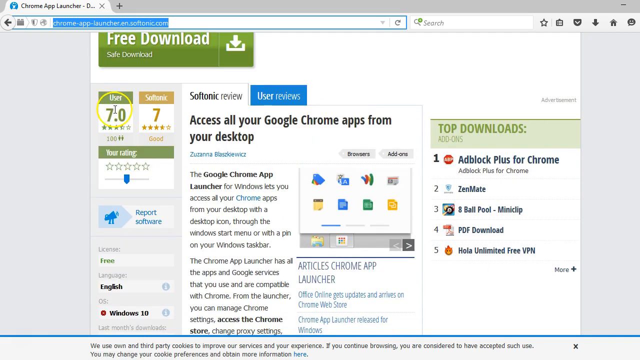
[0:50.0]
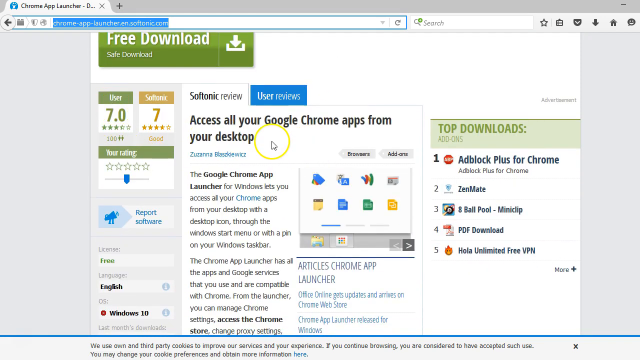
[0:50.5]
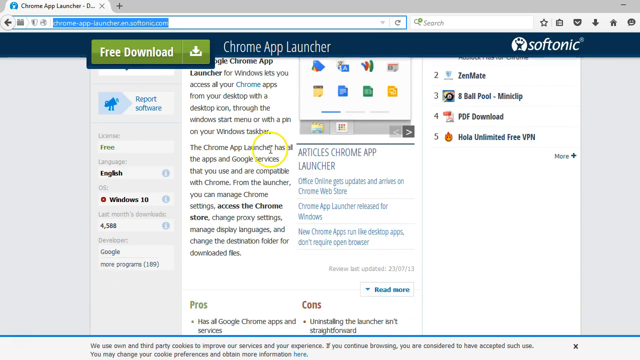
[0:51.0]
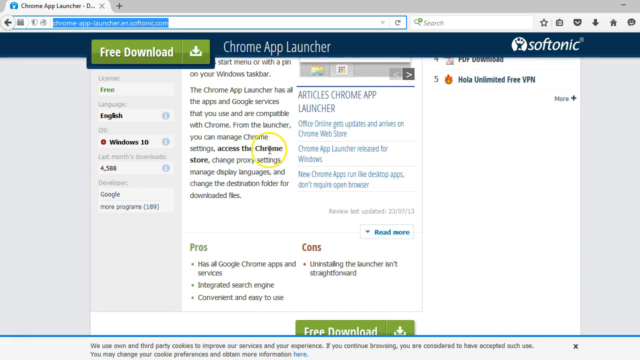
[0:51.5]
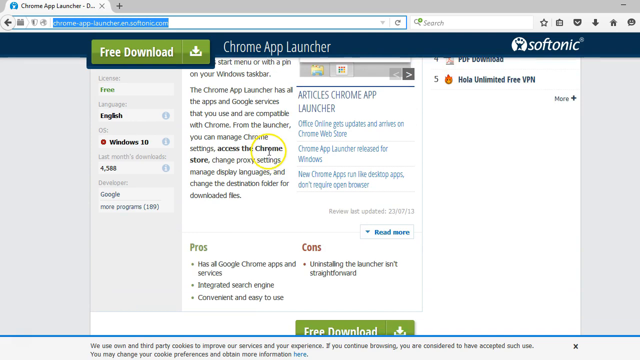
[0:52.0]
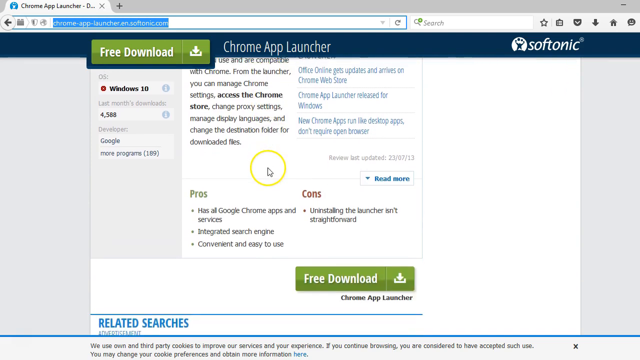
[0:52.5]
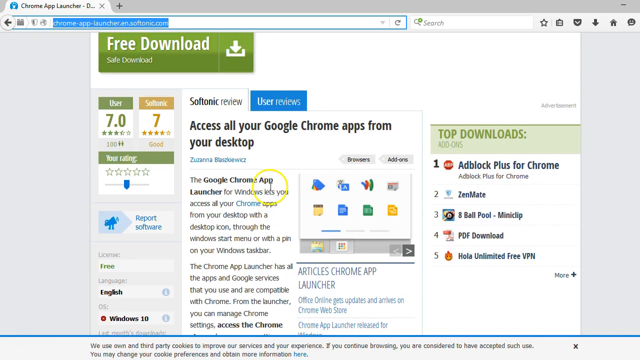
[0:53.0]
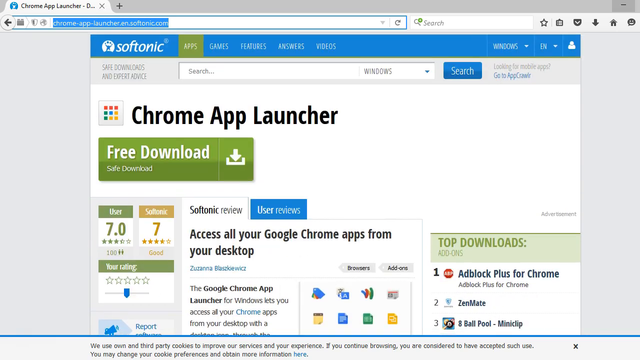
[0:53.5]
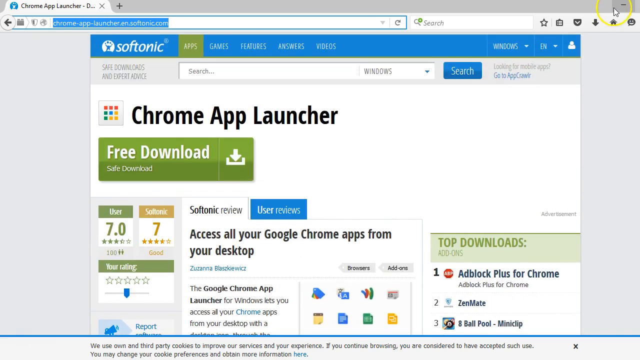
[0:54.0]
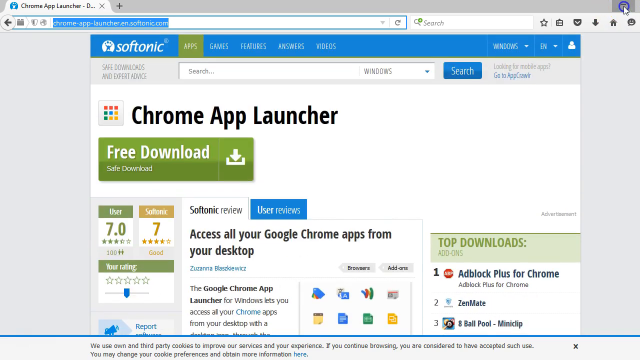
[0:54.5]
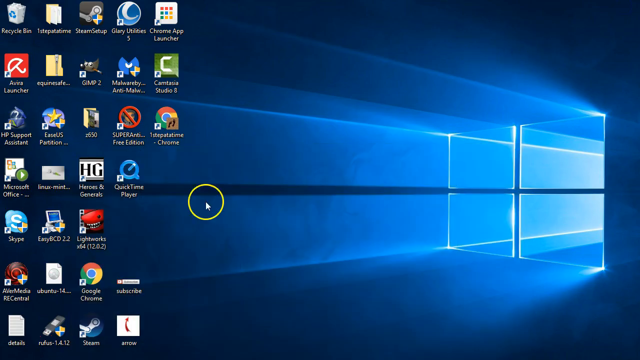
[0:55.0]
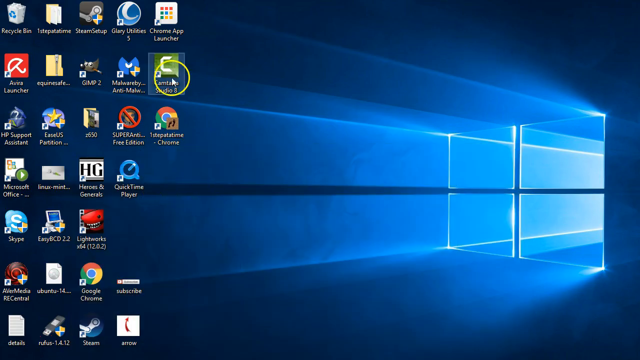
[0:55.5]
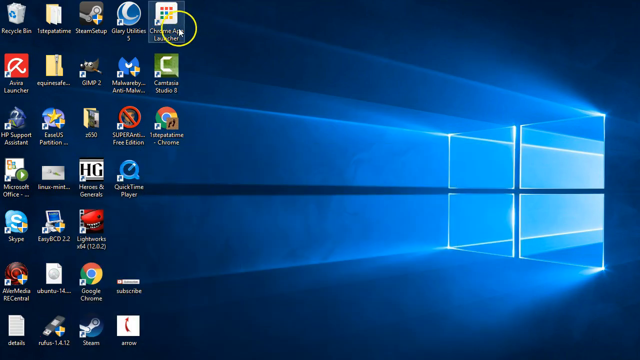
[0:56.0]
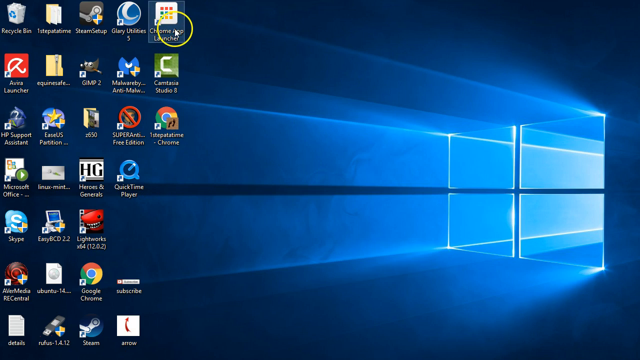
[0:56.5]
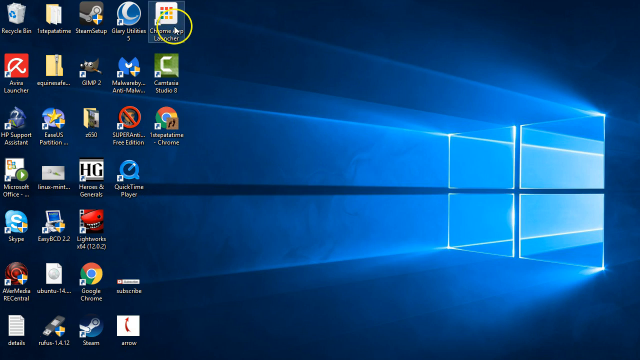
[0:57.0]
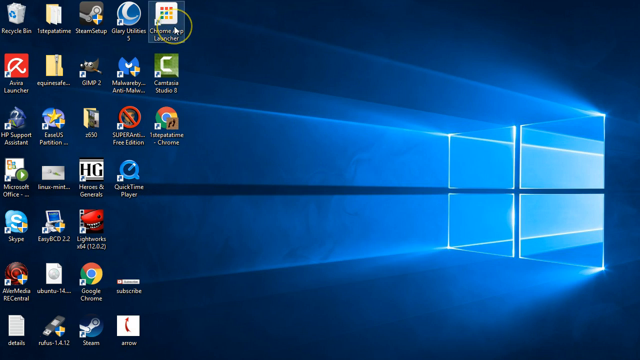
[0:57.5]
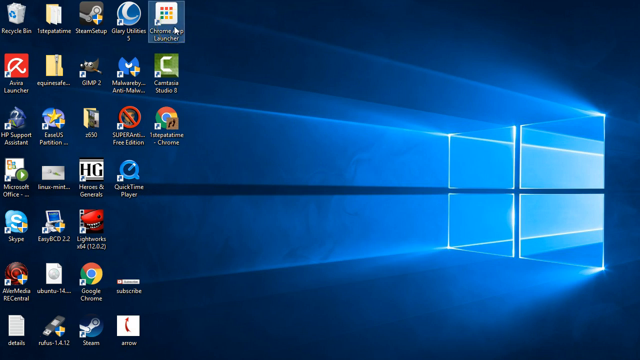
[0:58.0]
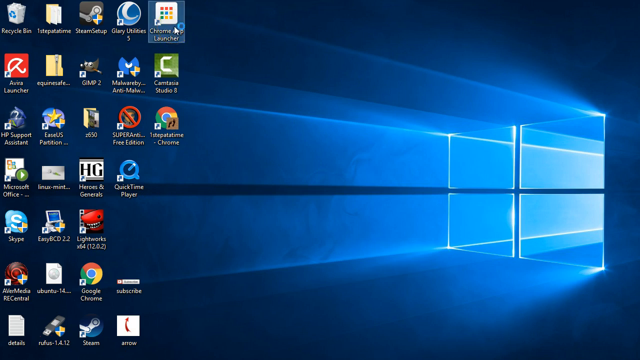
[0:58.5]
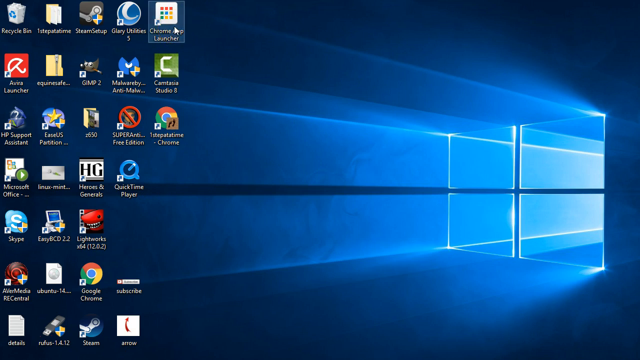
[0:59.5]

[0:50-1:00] A Softronics web page titled "Chrome App Launcher" is shown. The navigation bar is vertical across the top, with a blue background and white font, and the page underneath has a white background. At the top of the page is an icon labeled "Chrome App Launcher" and a green button for a free download. Beneath these are ratings on the left-hand side and a story on the right. The cursor is a white arrow with a circle that appears around it when it moves. The page scrolls down as the circle appears in the center of the screen, reaches the bottom, and immediately scrolls back up. The page is then minimized, revealing a Windows desktop with a blue background and a four-pane window on the right-hand side; bright lines of blue move across the screen toward the left, emulating light shining through the window. Five columns of icons are on the left-hand side of the desktop. The cursor bounces around over the Google Chrome Launcher icon at the top of the fifth column.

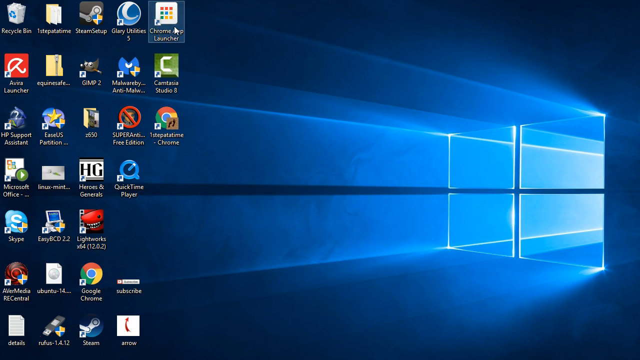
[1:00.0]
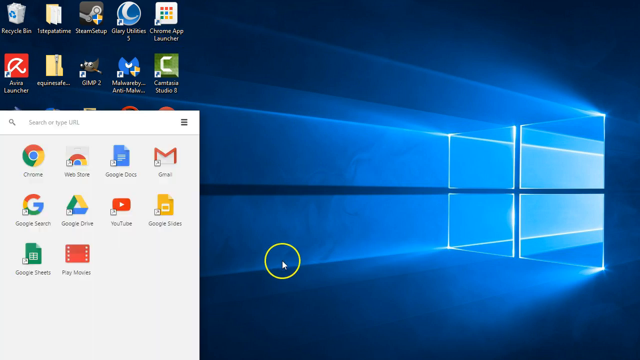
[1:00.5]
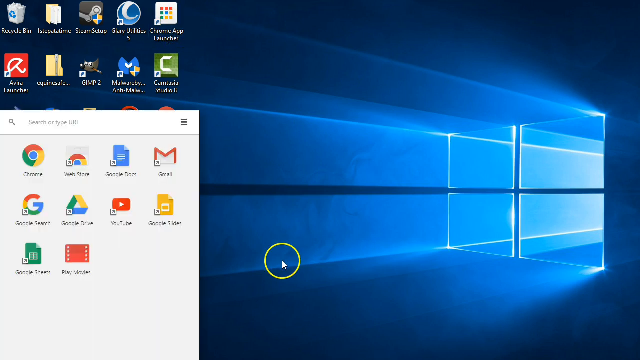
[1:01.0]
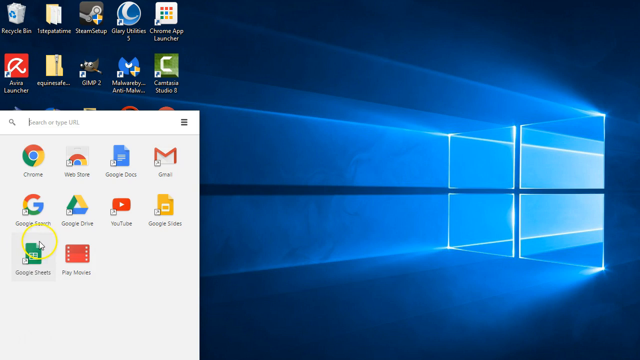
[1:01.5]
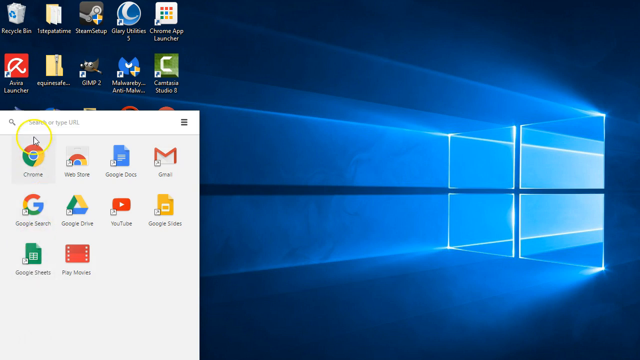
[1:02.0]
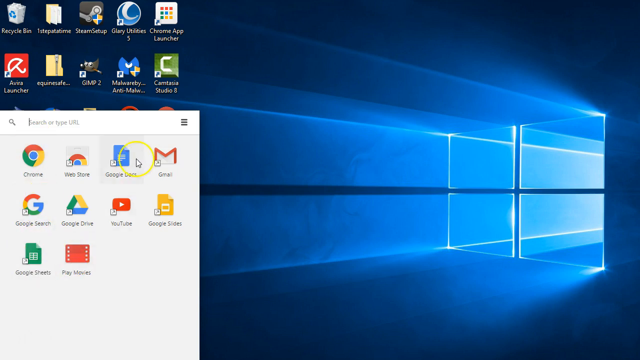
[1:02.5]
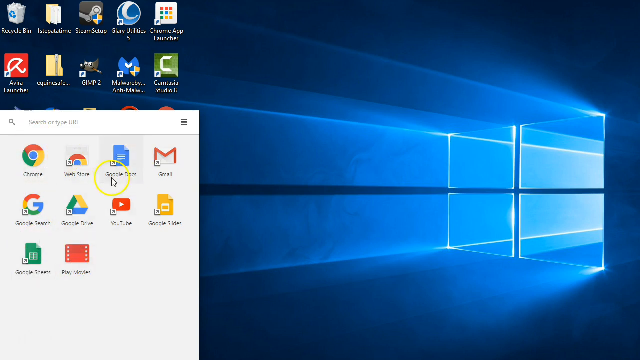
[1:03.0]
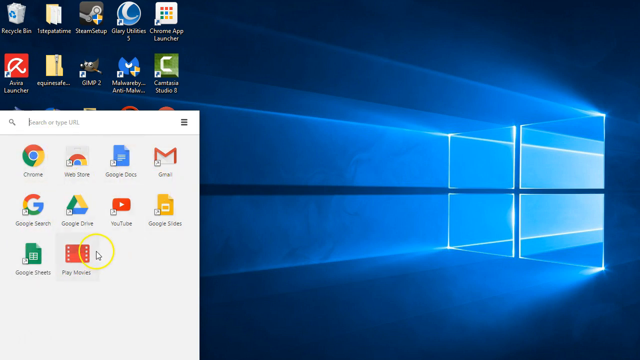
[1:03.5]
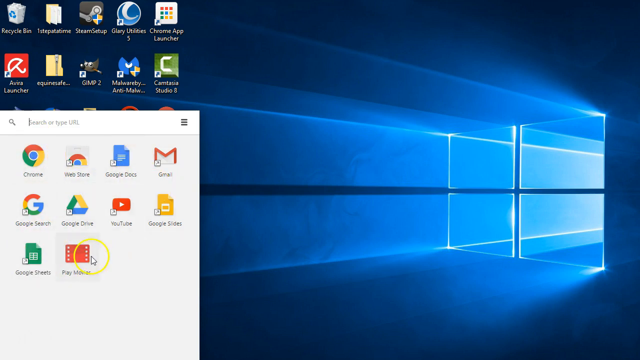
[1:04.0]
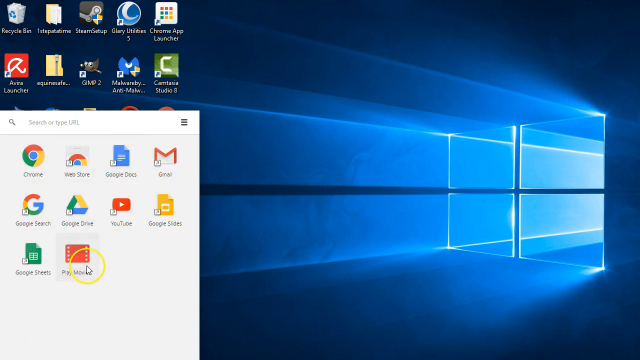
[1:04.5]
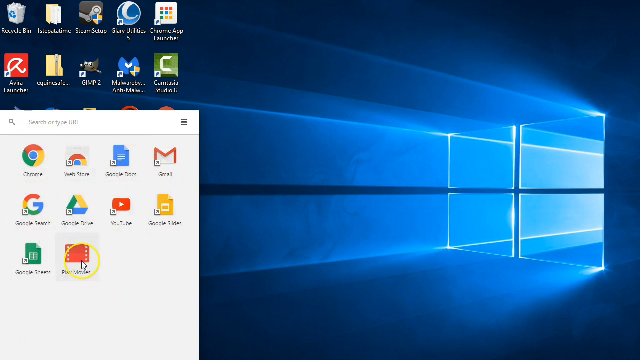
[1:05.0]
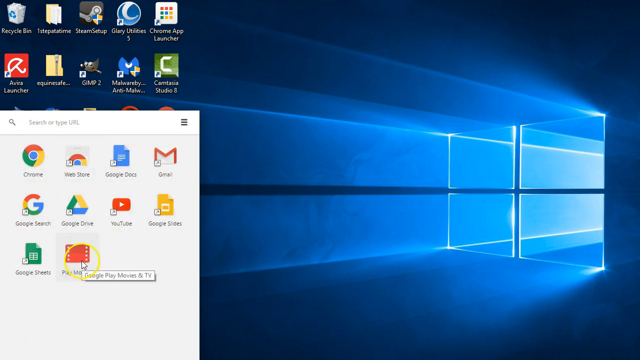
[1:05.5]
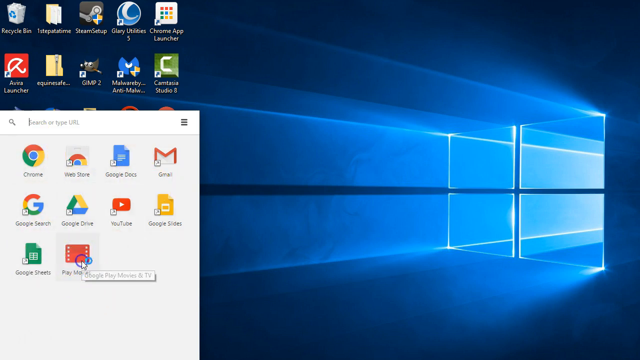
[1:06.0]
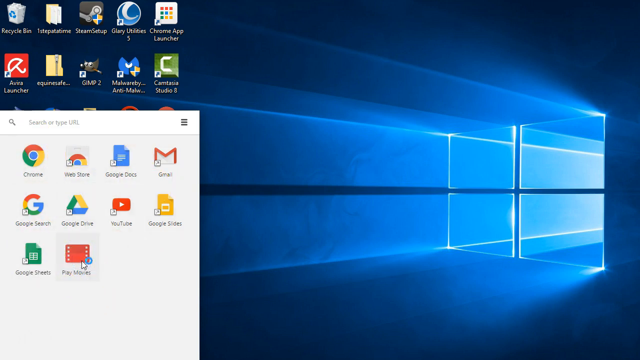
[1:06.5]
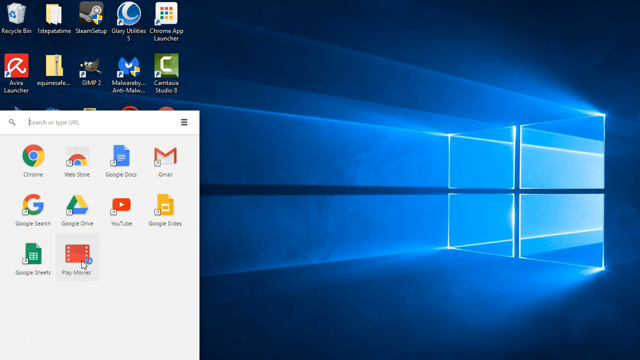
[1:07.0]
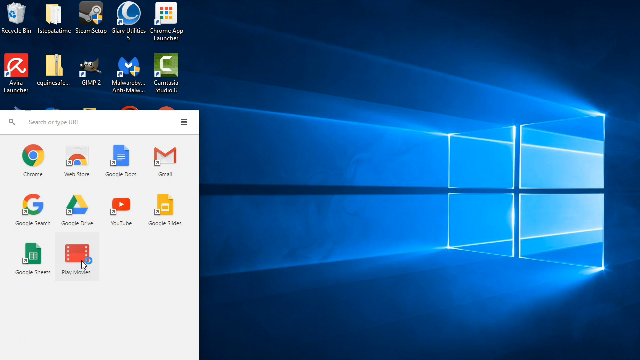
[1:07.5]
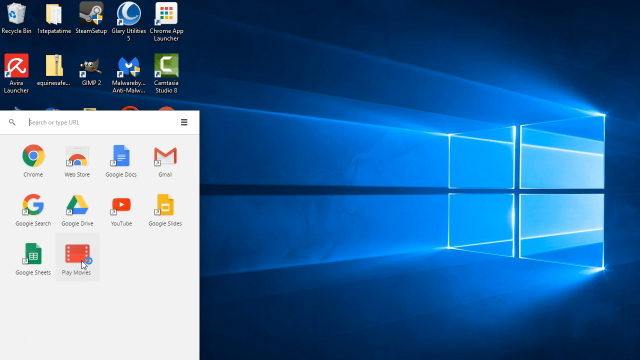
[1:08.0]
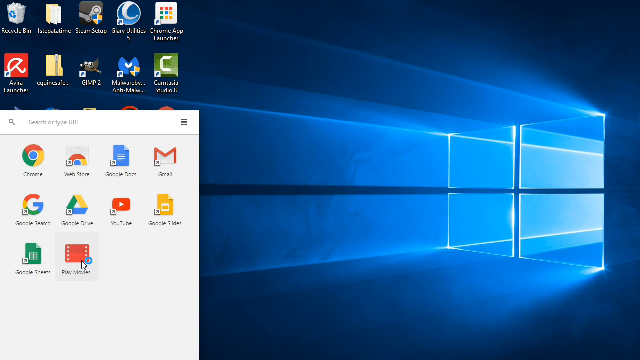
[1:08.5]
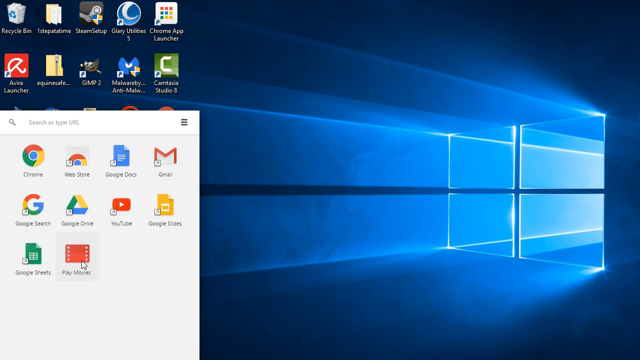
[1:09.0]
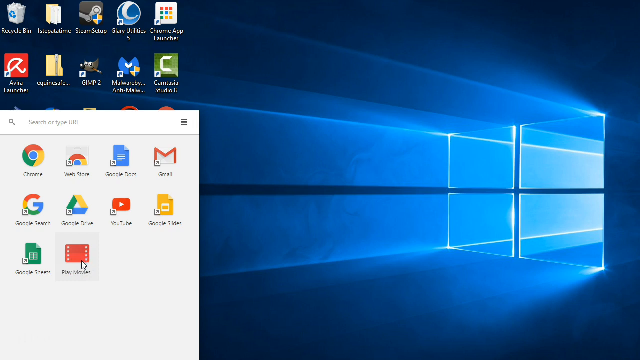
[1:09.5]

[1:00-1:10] A Windows desktop is shown, its background in different shades of blue. A four-pane window is on the right-hand side, with lines of bright color appearing to shine from it toward the left-hand side. Initially, five columns of icons are visible on the left-hand side. A white arrow cursor is in the center of the screen; when it moves, a green circle about the size of an icon appears around it. The cursor clicks the Chrome App Launcher icon at the top of the fifth column, and a window pops up at the bottom left, covering two thirds of the screen's height and all five columns. The window contains ten Google app icons in three rows, including Chrome, Gmail, Excel, and Slides. The cursor circles the Chrome icon, moves randomly around the window, stops on the Google Slides icon in the bottom row, and clicks, and a circular blue wait icon appears beneath the cursor.